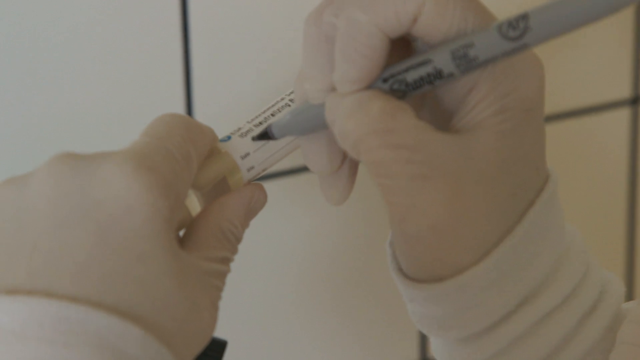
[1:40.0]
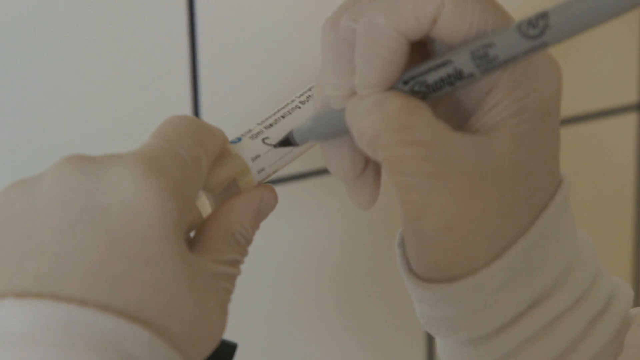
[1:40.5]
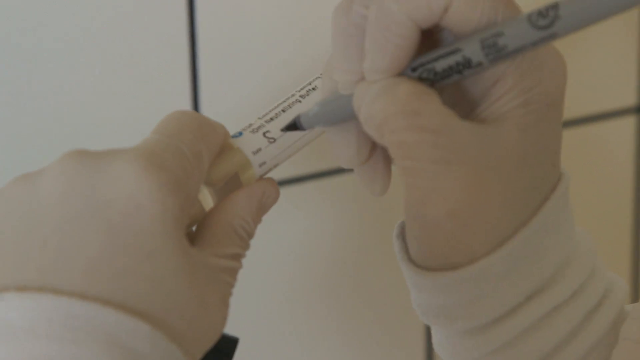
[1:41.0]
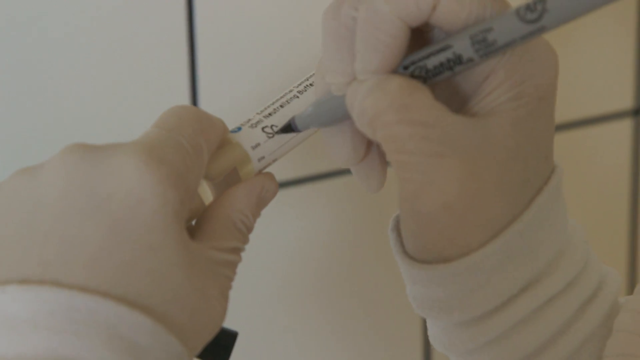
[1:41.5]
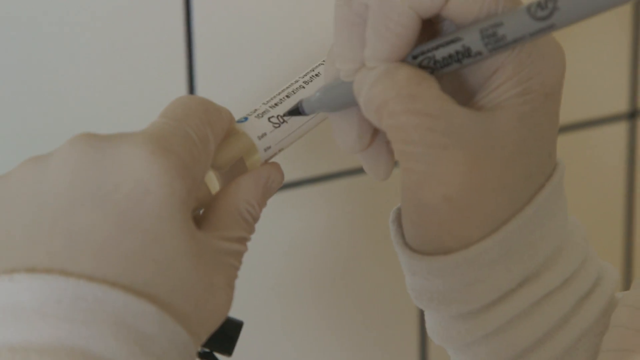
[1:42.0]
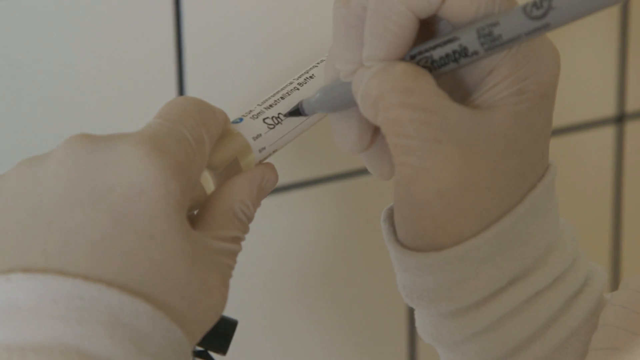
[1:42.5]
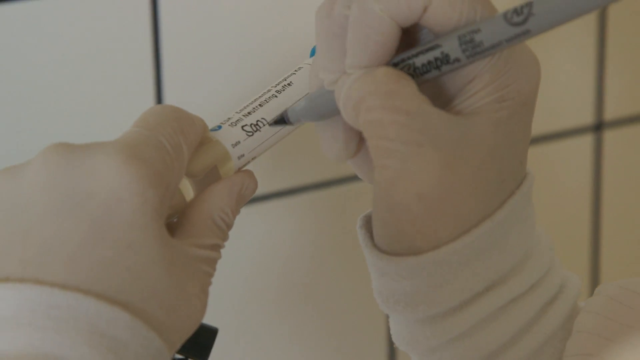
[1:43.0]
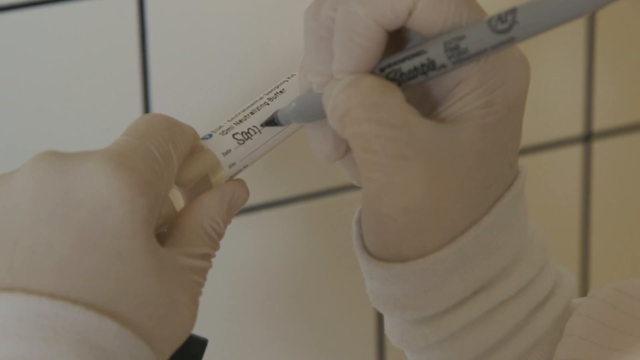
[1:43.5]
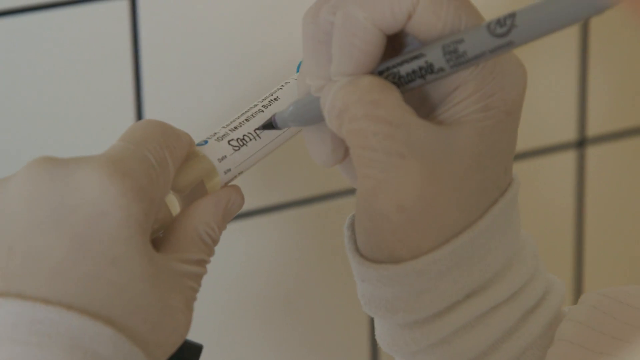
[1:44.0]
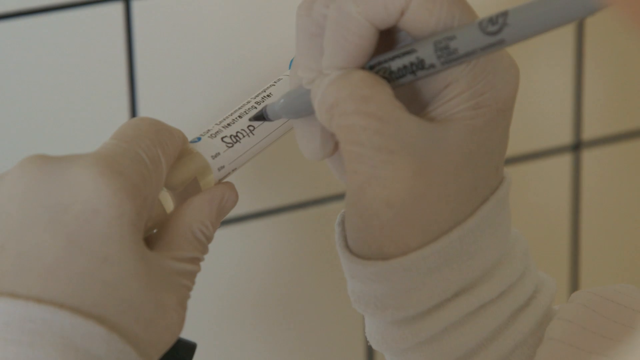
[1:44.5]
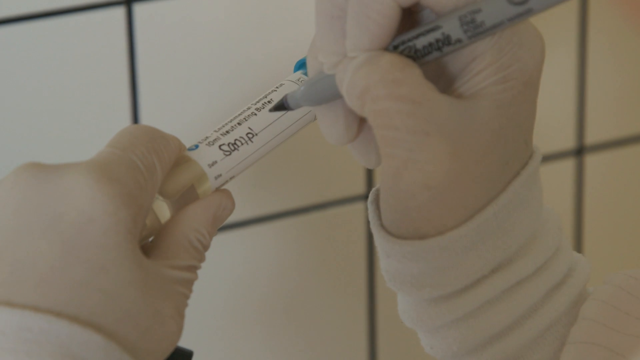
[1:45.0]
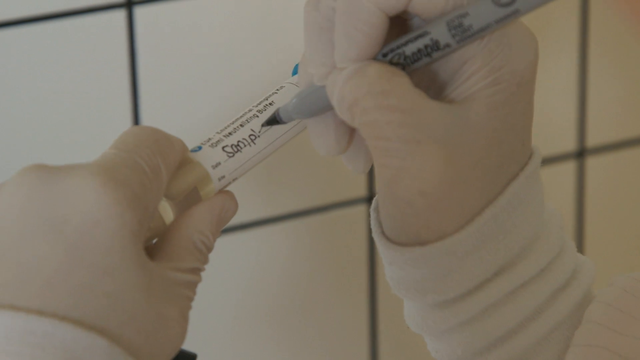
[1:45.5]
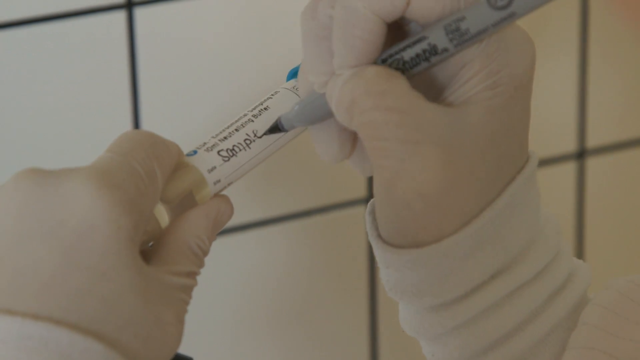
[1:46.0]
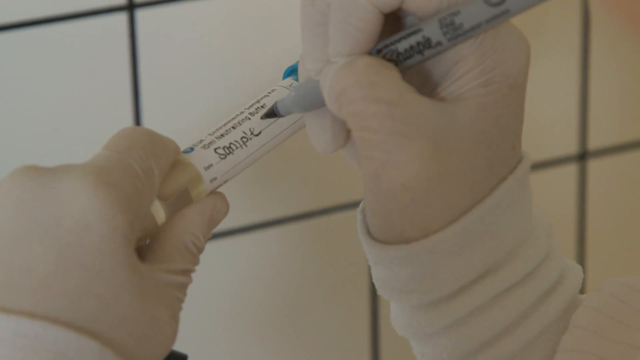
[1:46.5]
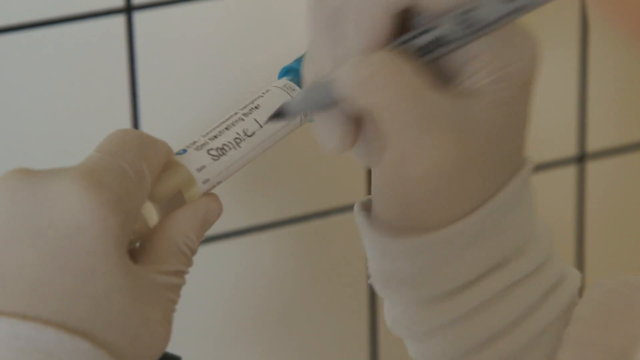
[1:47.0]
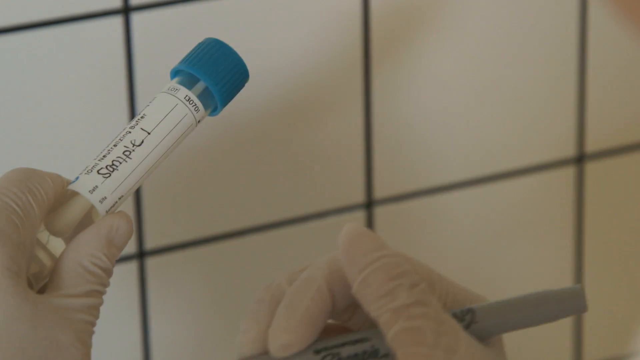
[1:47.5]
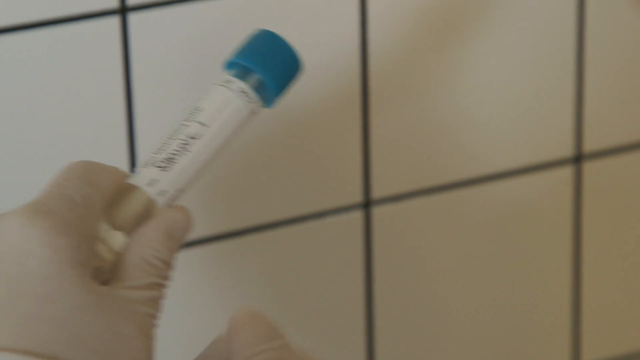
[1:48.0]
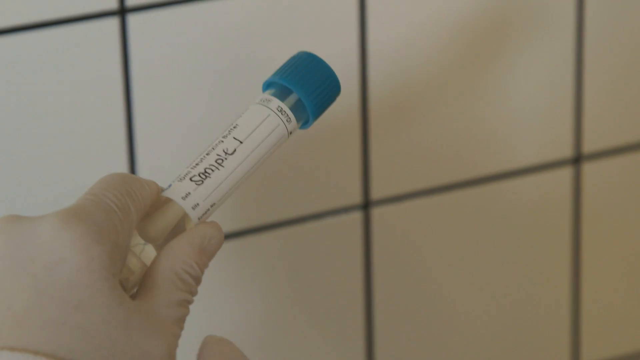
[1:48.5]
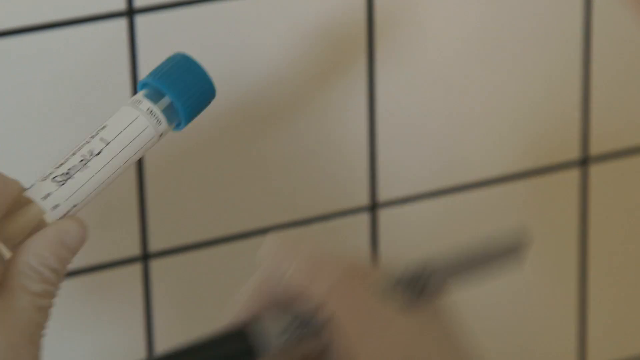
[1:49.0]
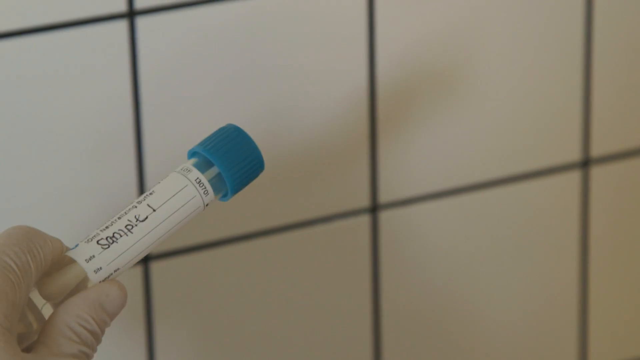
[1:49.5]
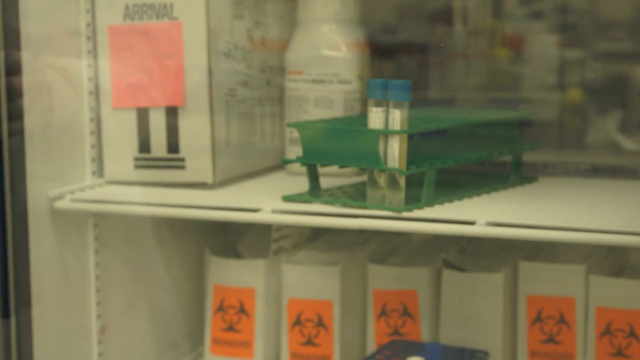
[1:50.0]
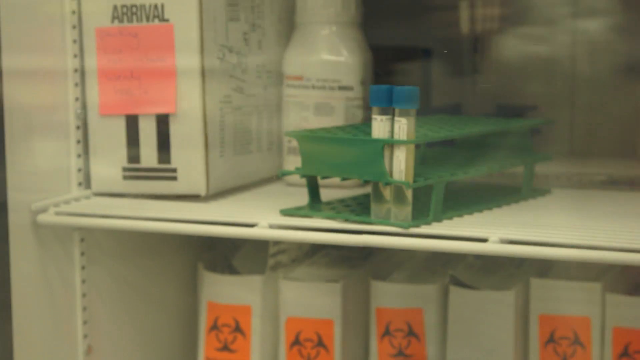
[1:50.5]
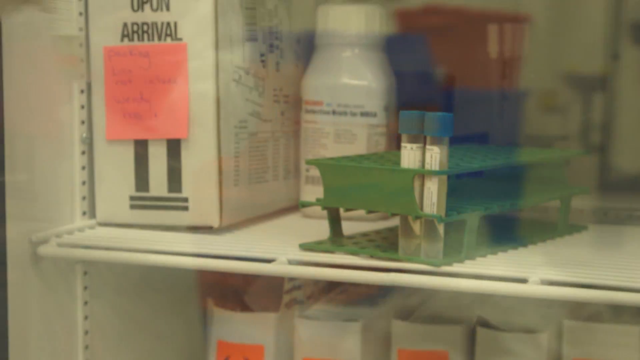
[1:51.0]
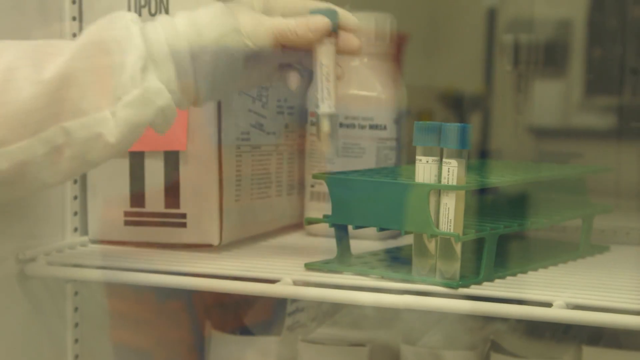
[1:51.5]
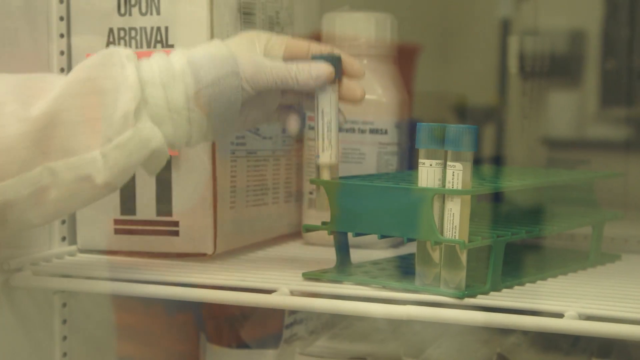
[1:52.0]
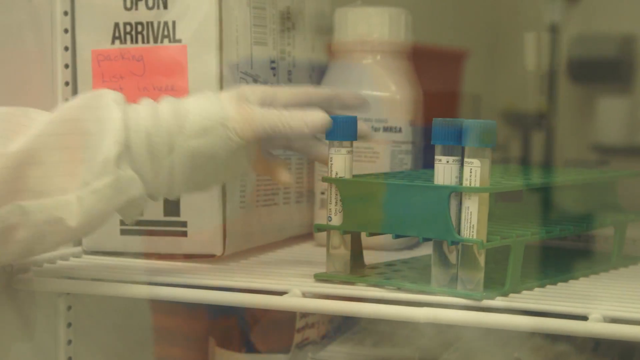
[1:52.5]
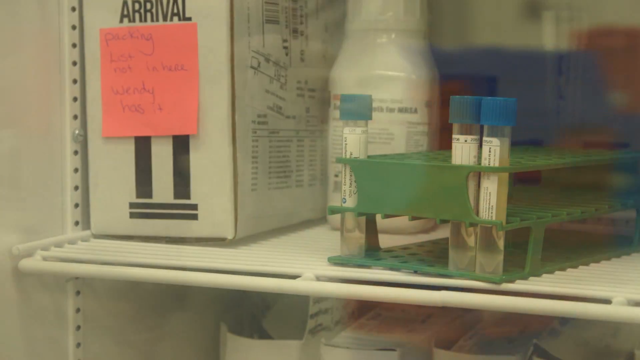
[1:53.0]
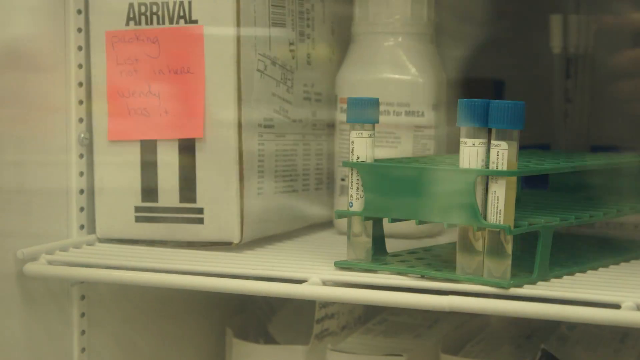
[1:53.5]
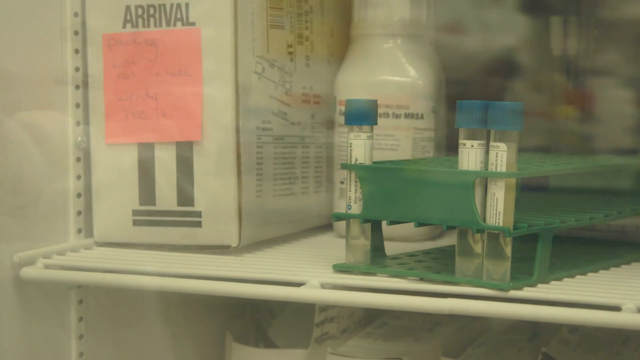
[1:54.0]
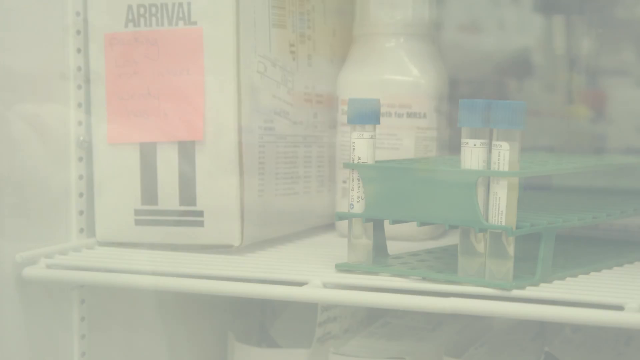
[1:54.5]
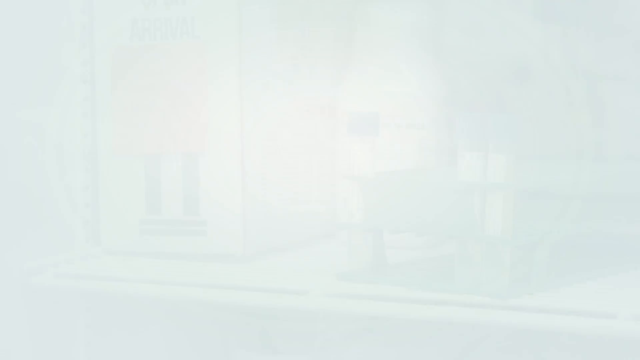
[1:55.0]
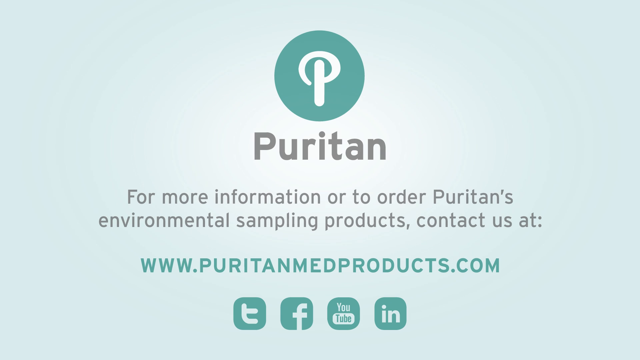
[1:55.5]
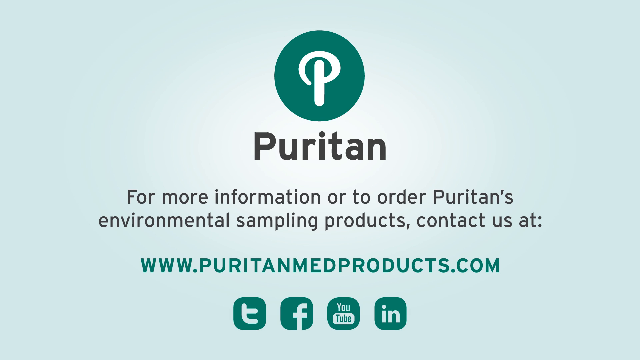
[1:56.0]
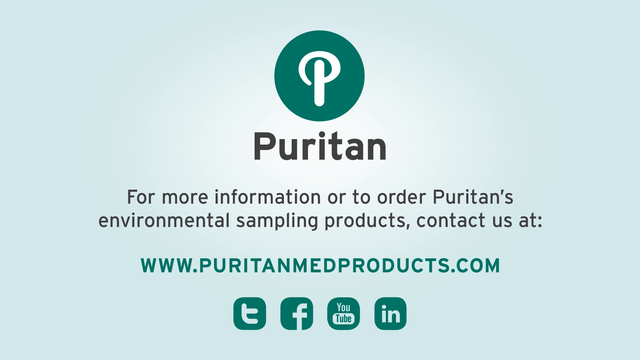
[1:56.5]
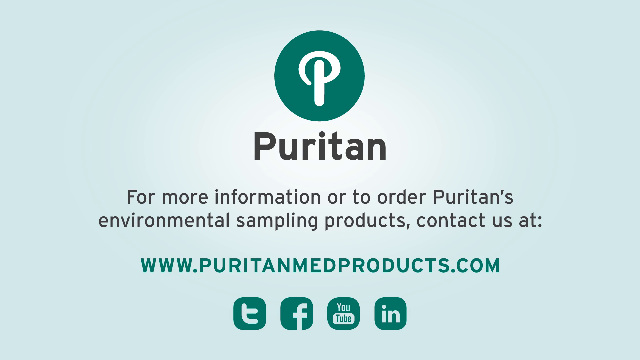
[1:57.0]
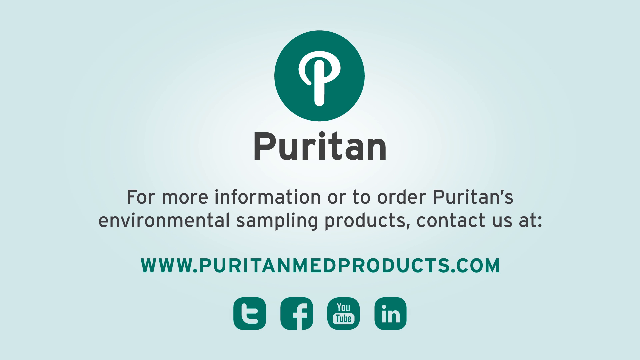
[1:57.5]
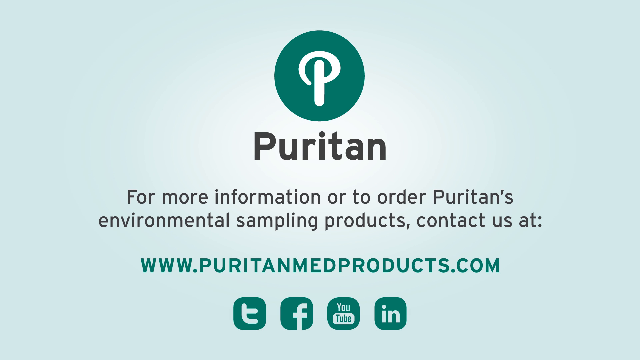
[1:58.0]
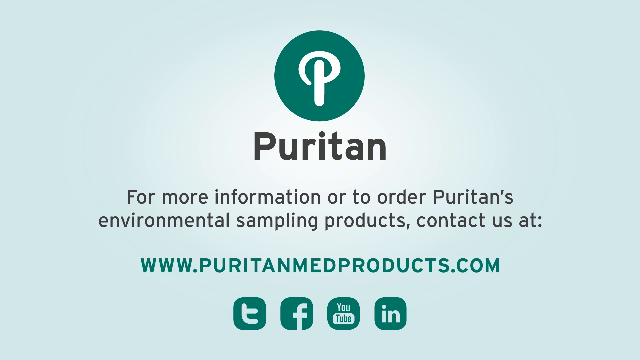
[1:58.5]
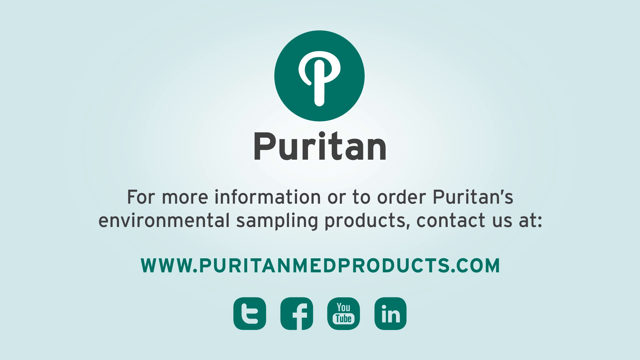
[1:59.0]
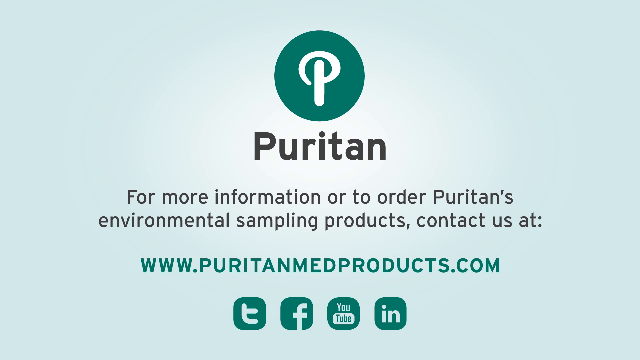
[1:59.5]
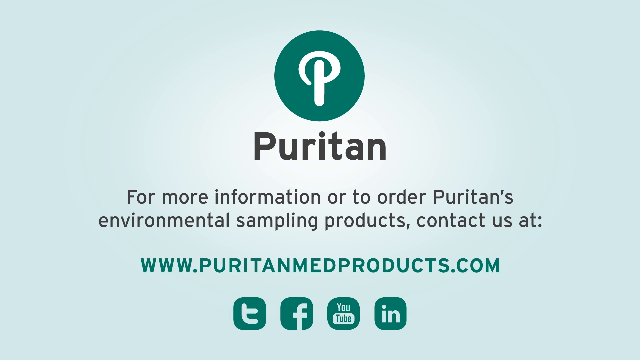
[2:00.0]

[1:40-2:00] She writes "sample one" on a label on the side of the test tube, then places the tube in a test tube holder behind a glass door. Closing text reads "For more information or to order Puritans Environmental Sampling Products contact us at" followed by the website PuritanMedProducts.com, along with icons for Twitter, Facebook, apparently LinkedIn, and one other site. The closing text is shown only briefly.